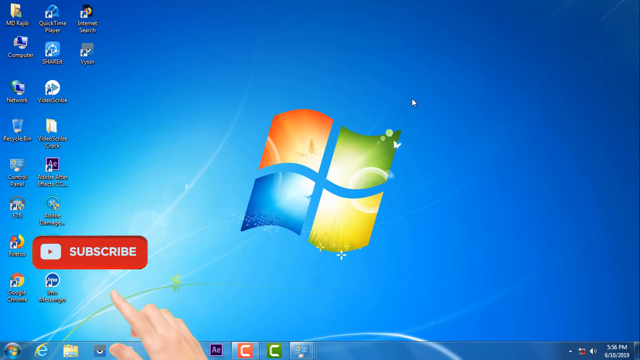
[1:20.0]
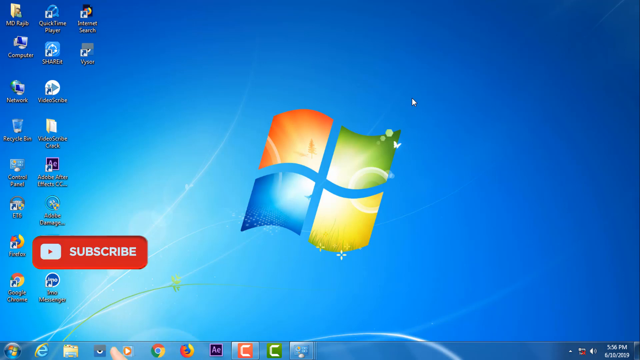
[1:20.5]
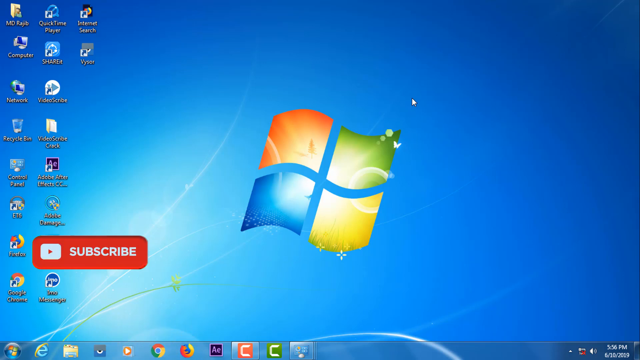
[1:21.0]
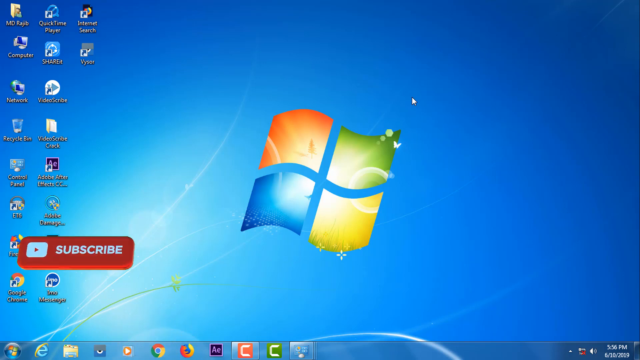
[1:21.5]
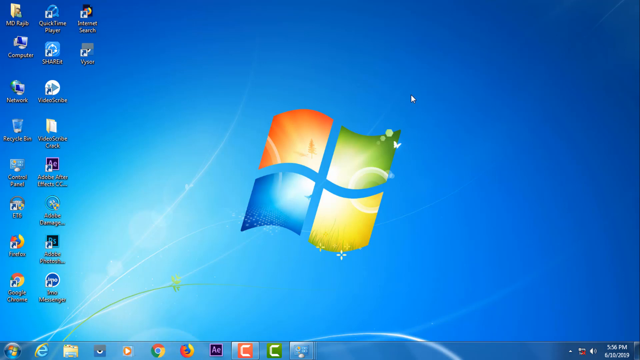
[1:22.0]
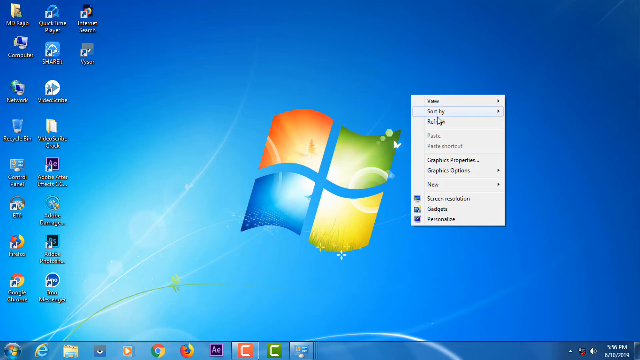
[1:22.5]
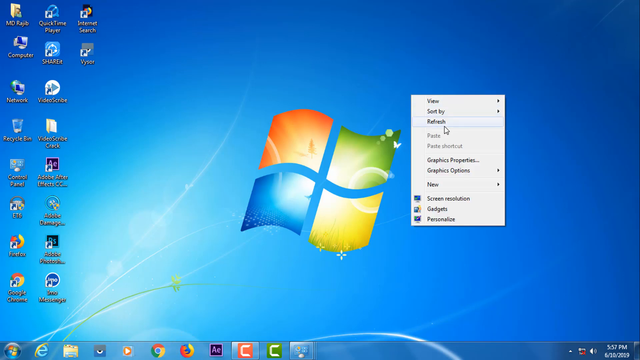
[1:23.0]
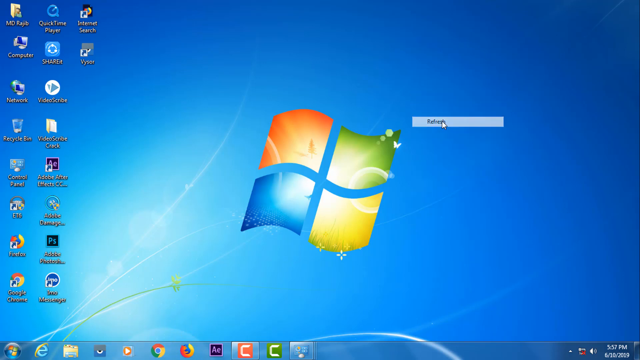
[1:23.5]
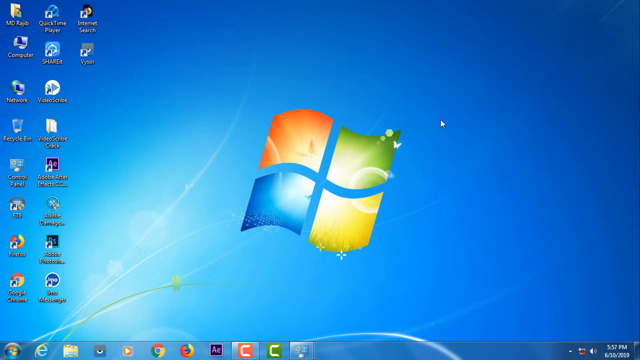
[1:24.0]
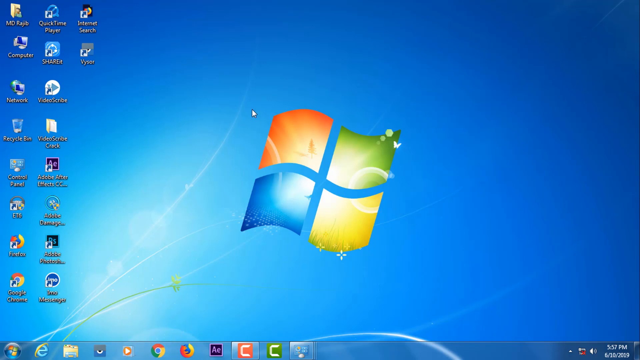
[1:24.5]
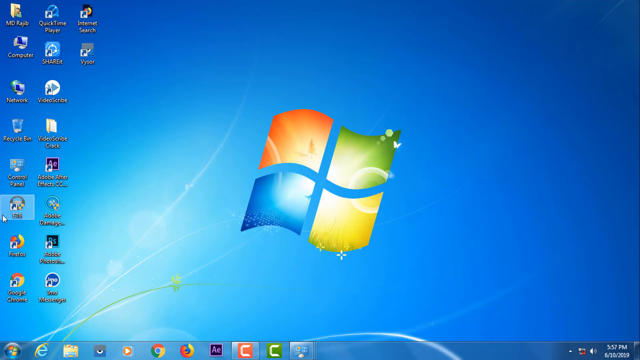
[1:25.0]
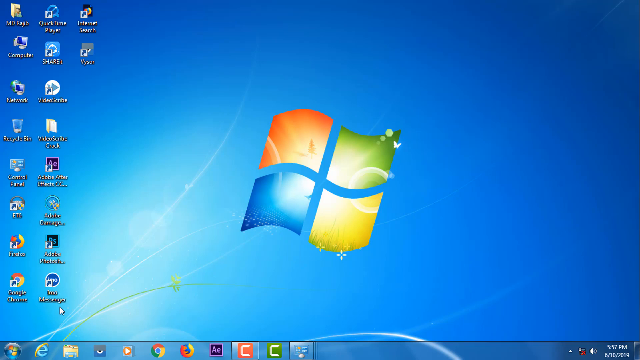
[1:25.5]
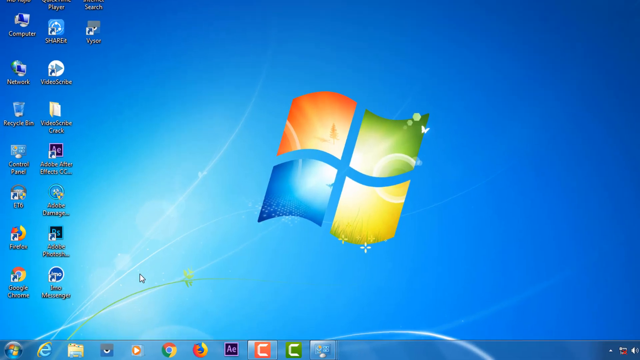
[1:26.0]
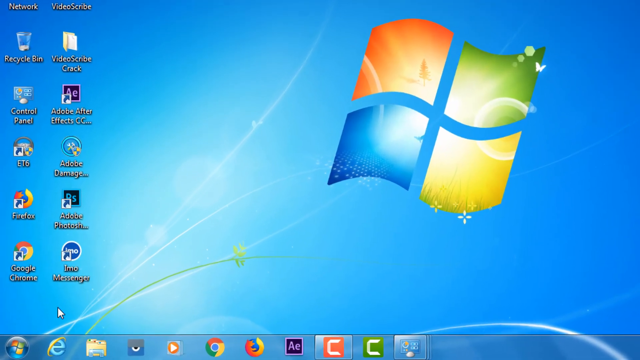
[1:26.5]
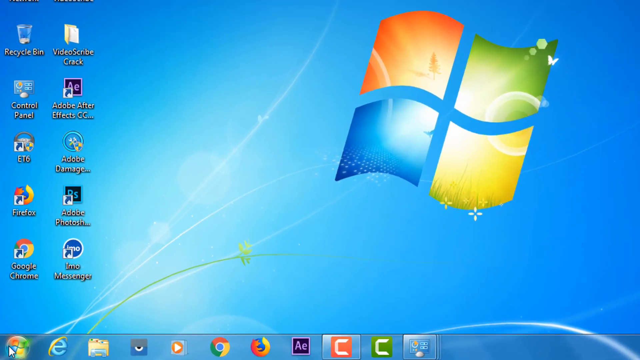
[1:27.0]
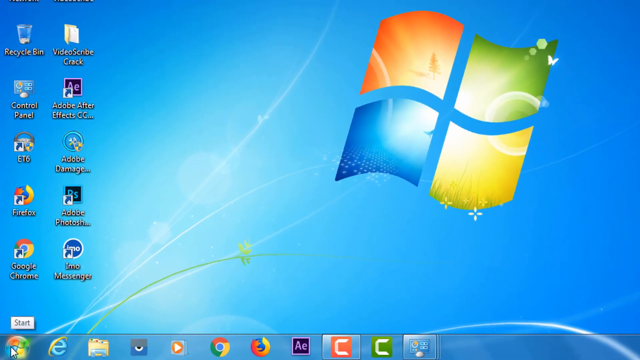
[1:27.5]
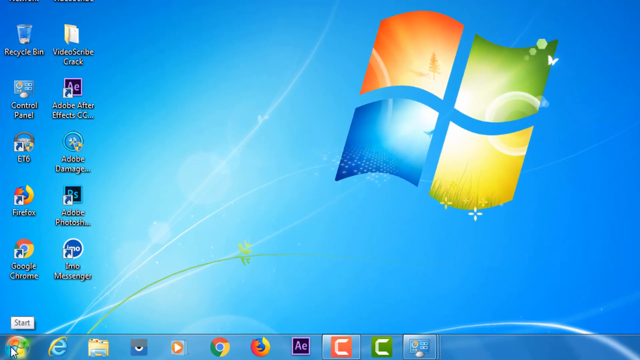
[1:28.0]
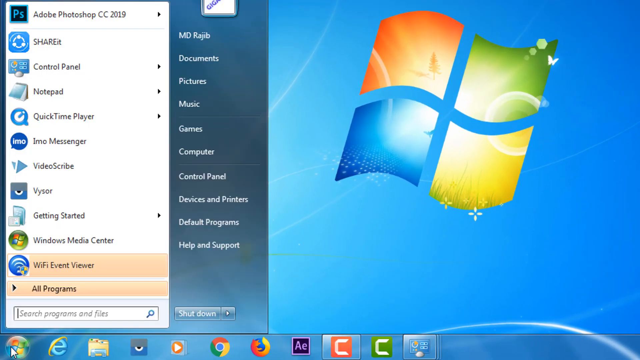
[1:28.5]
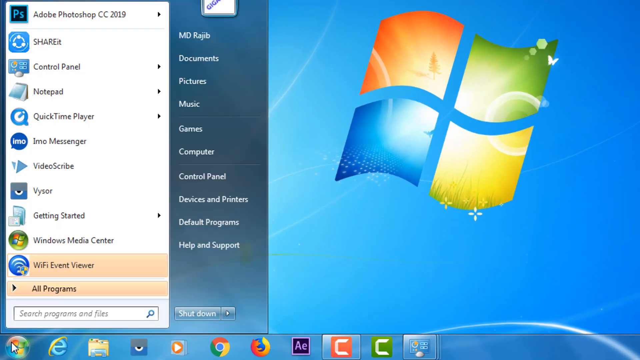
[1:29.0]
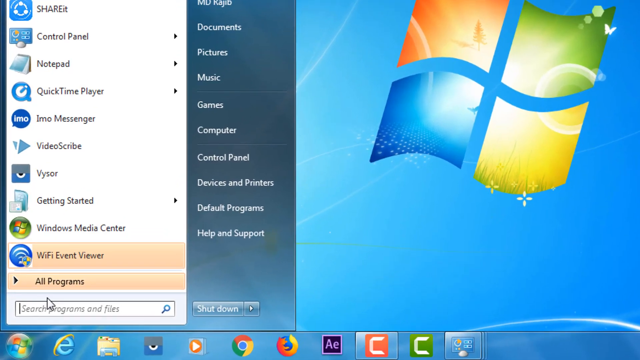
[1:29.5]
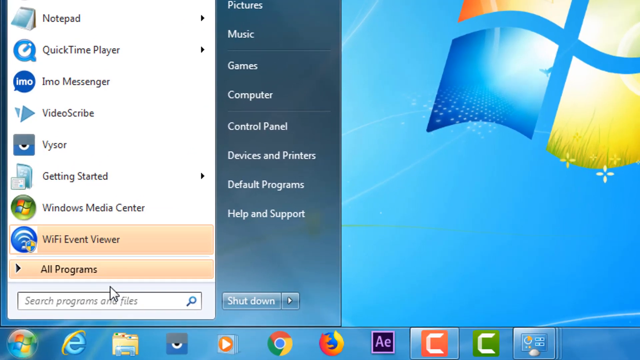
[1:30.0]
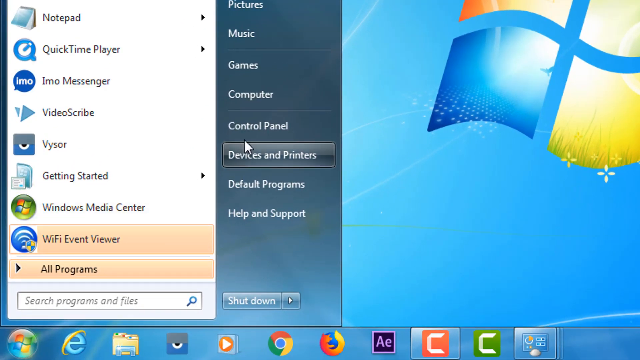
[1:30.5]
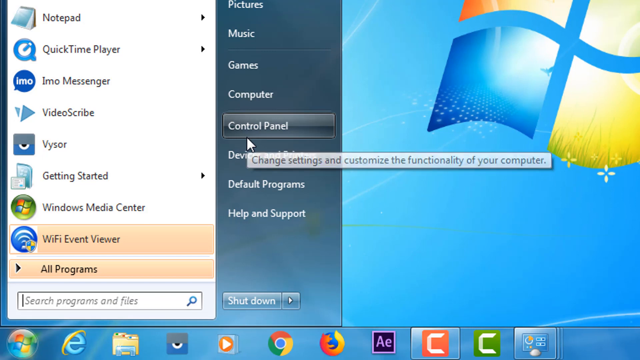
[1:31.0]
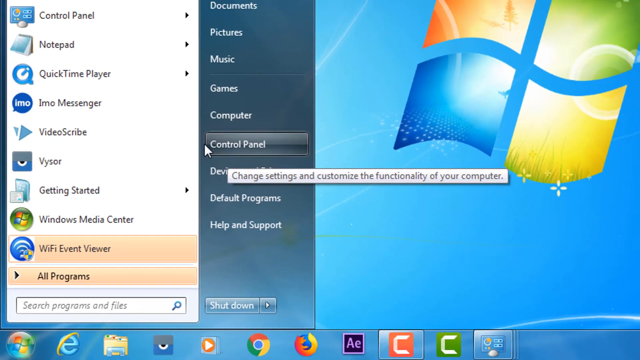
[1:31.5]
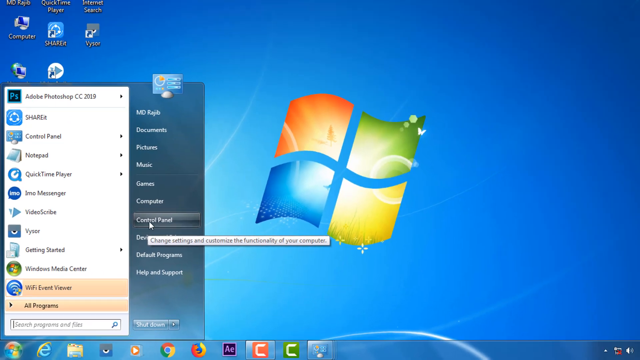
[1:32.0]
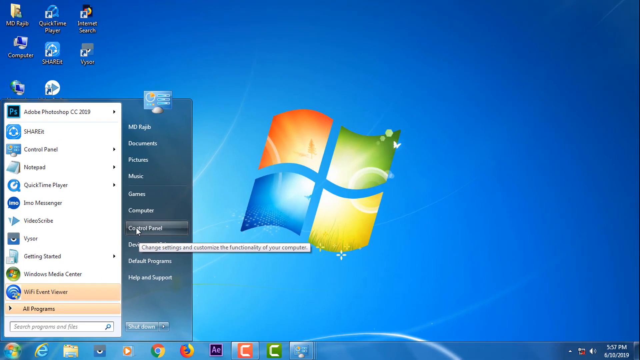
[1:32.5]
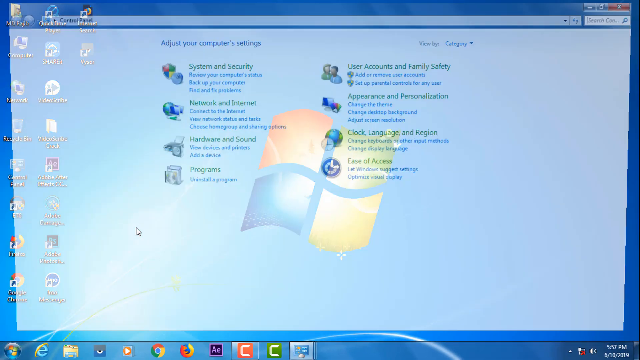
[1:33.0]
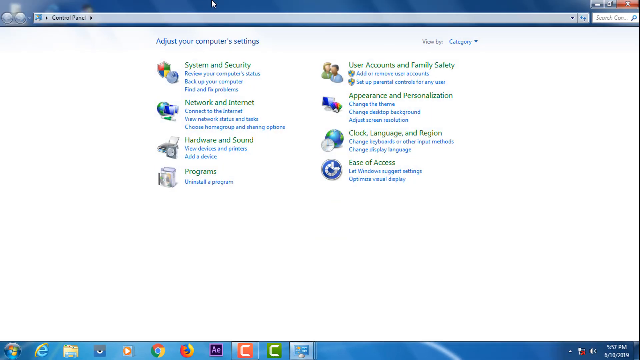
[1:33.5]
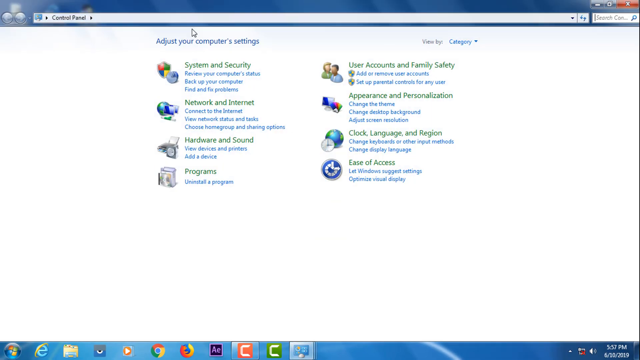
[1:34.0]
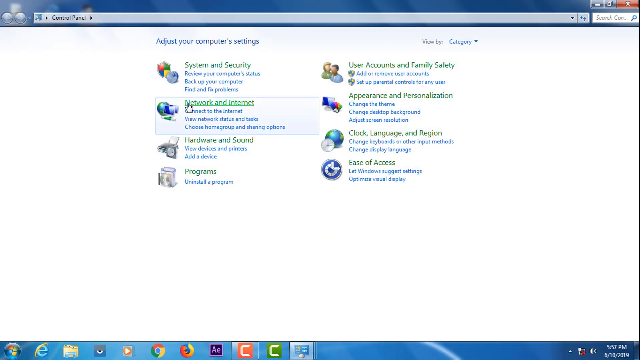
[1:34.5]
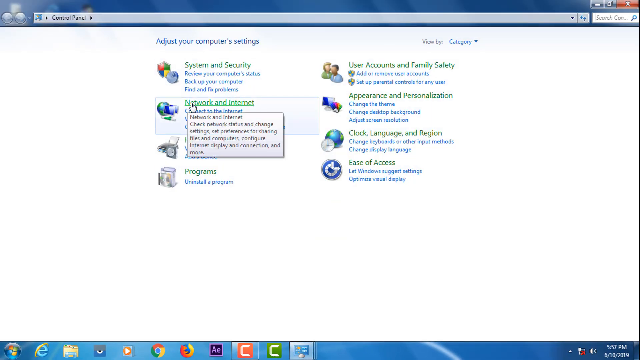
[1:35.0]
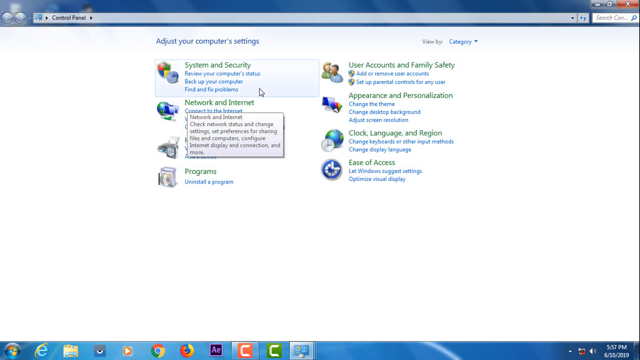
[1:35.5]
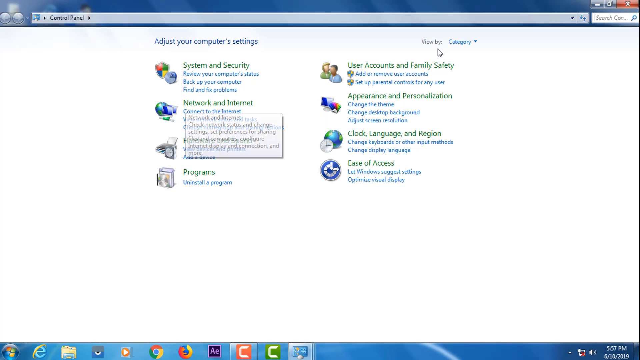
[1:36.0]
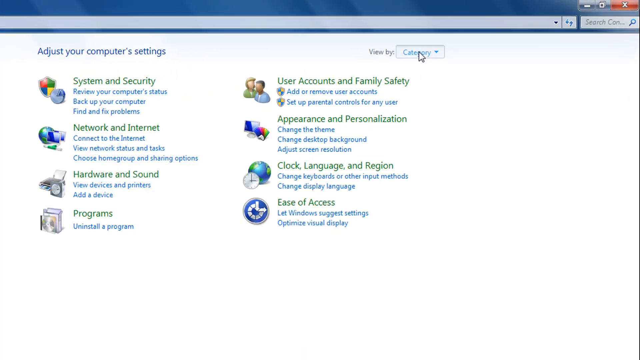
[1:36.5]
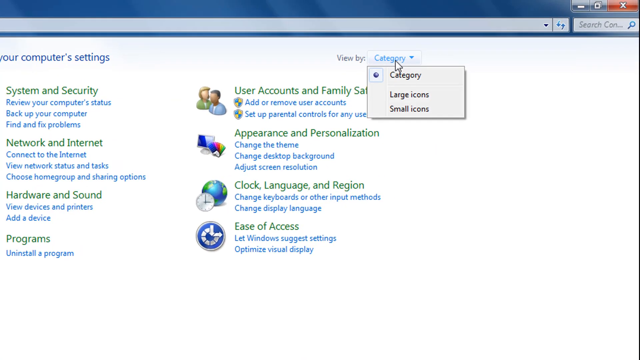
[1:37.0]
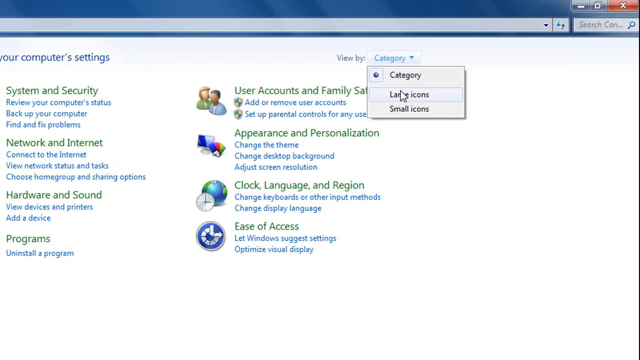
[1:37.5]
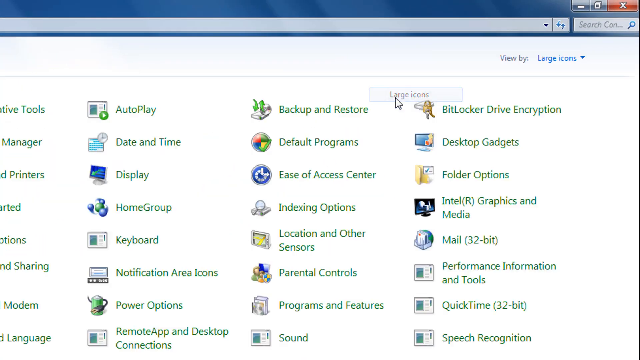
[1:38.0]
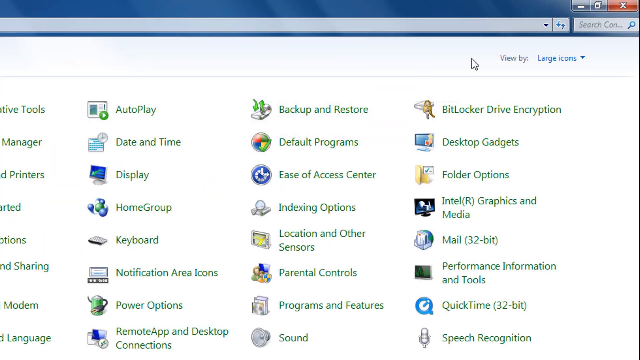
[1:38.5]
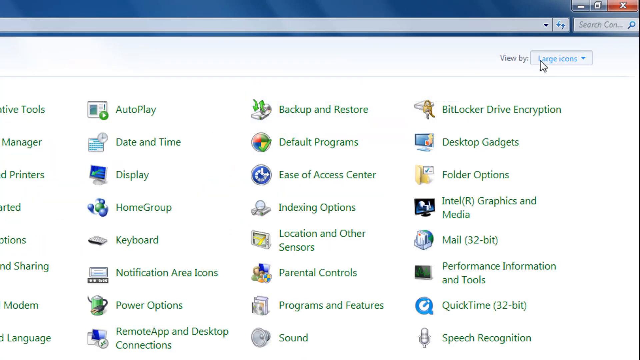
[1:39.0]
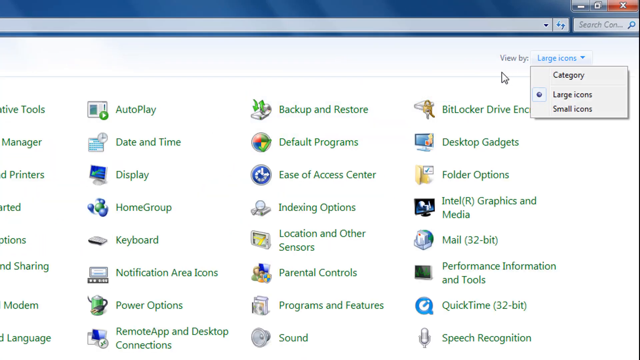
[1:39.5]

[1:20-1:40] The Windows screen shows a blue background with the red, green, yellow and blue Windows logo in the middle and some apps down the left-hand side. The red YouTube subscribe bar is just visible in the bottom left, moving off to the left side of the screen and rotating out. The user right-clicks, bringing up the white mini menu, clicks refresh and wiggles the mouse. The view zooms in on the bottom left corner, where the user clicks the start button, showing a "search programs and files" bar. The mouse moves up and to the right, away from the bar, to a white labeled button called "control panel." The user clicks it as the screen zooms out, revealing a full-screen white Control Panel menu. The user clicks category, large icons, large icons, and category.